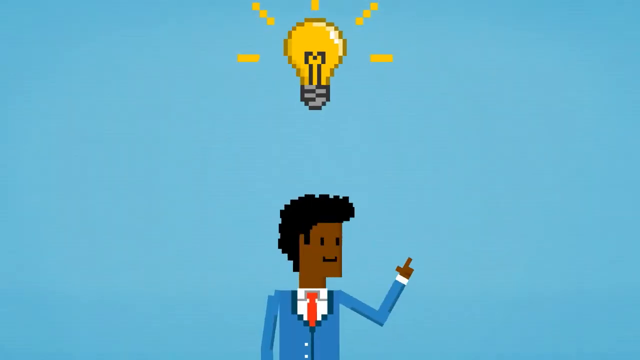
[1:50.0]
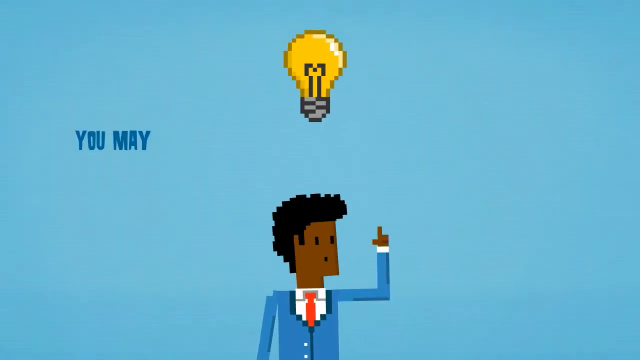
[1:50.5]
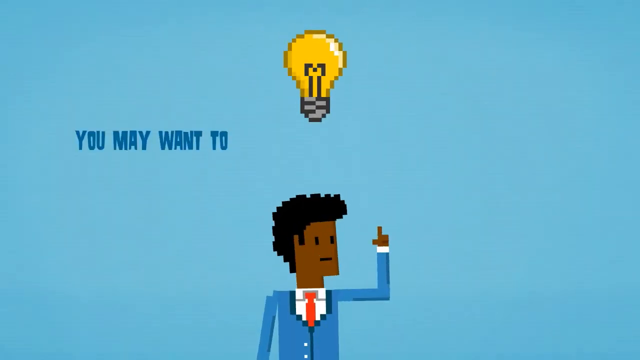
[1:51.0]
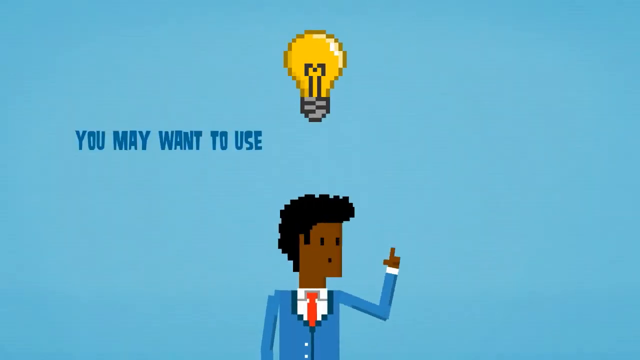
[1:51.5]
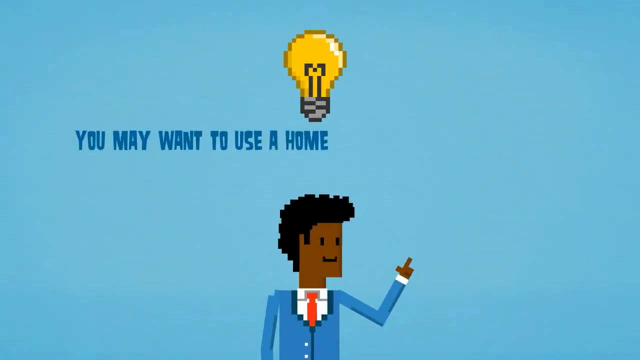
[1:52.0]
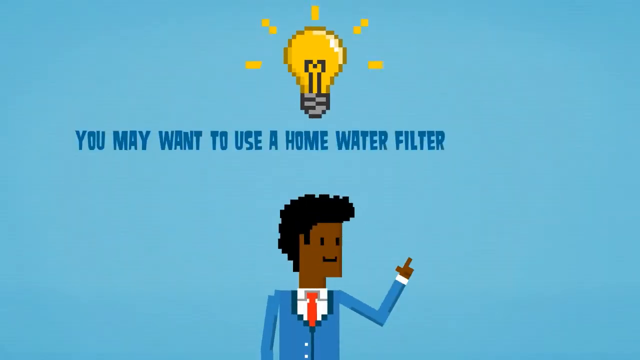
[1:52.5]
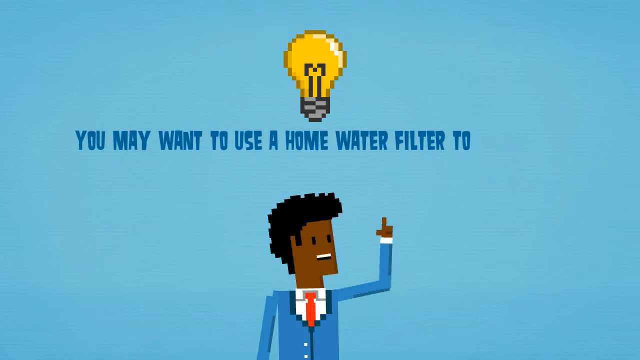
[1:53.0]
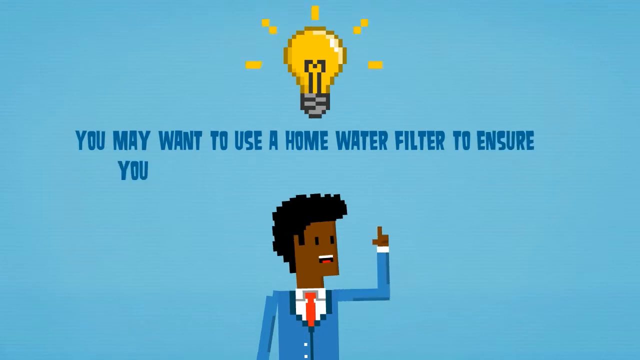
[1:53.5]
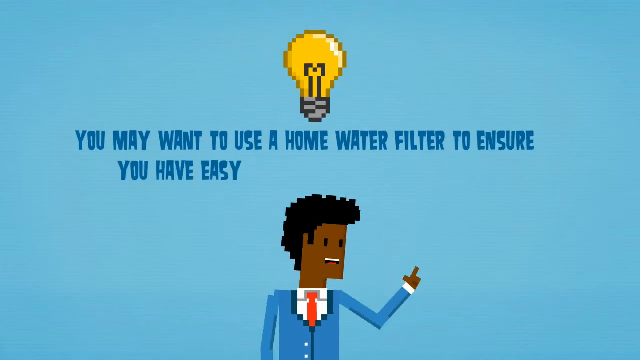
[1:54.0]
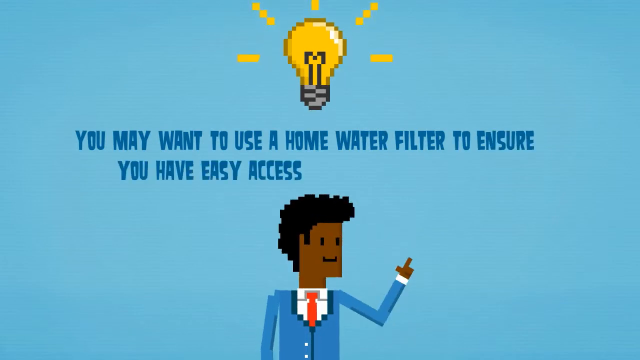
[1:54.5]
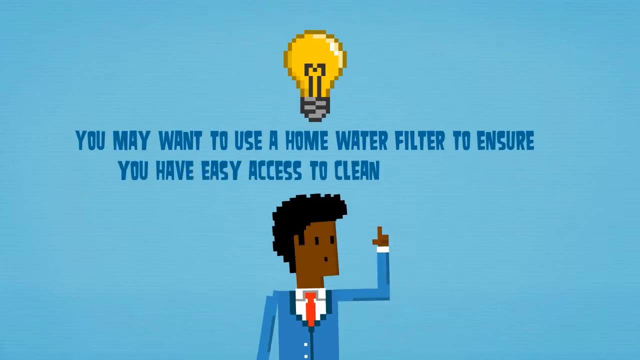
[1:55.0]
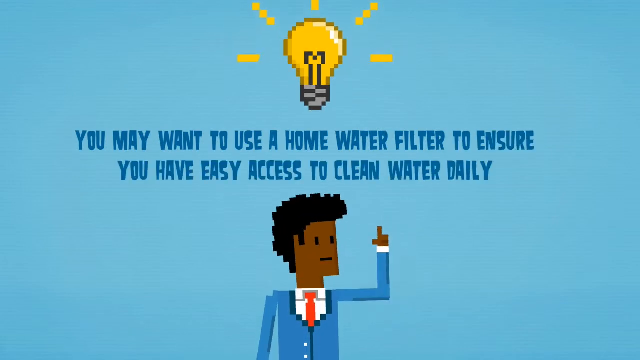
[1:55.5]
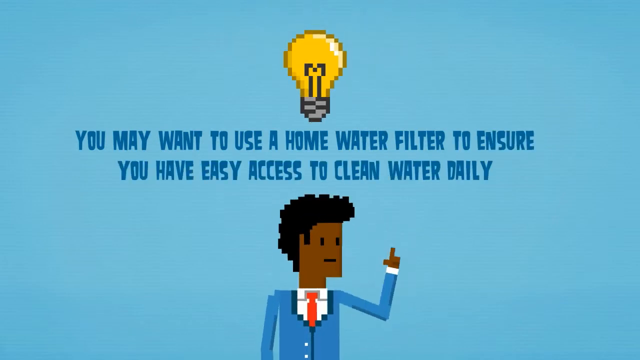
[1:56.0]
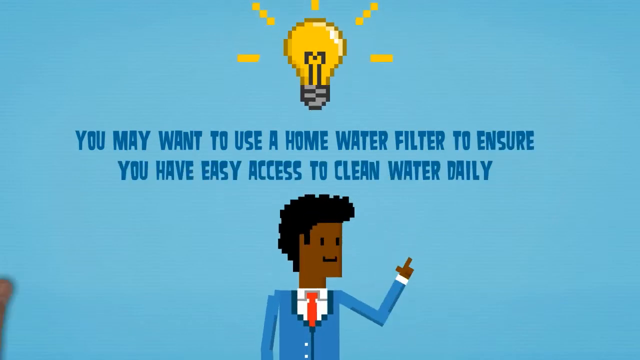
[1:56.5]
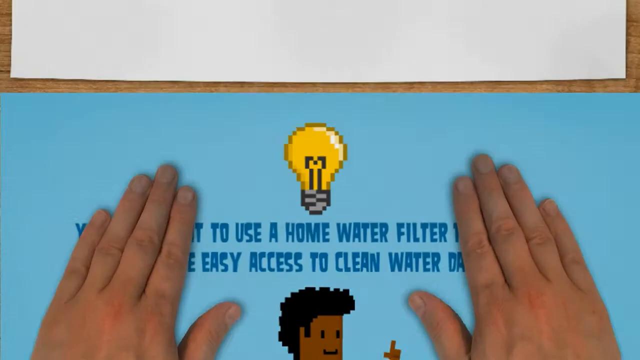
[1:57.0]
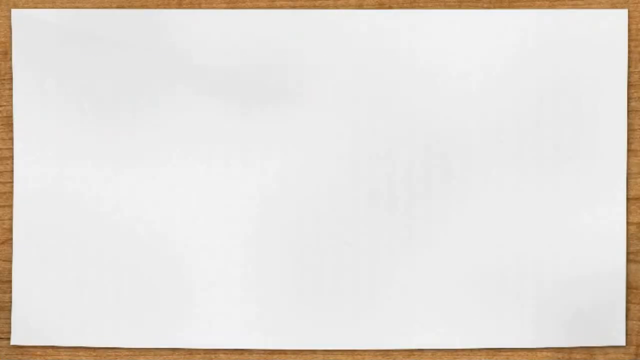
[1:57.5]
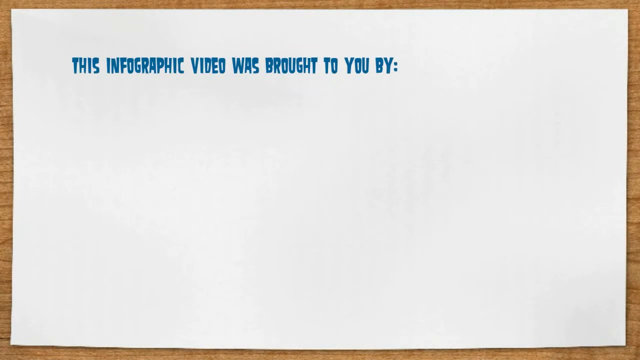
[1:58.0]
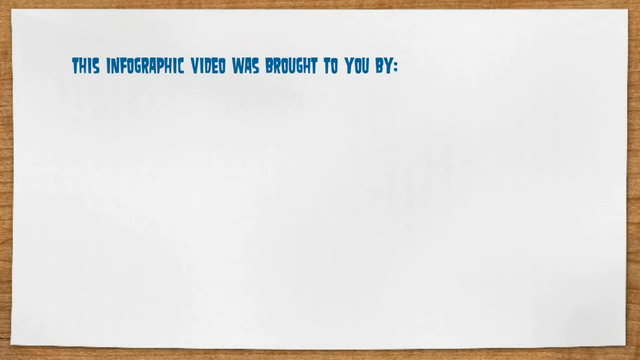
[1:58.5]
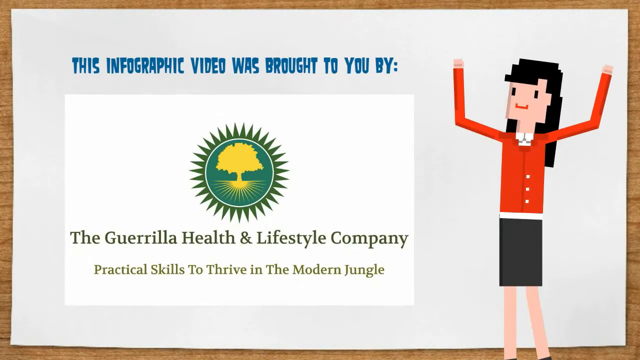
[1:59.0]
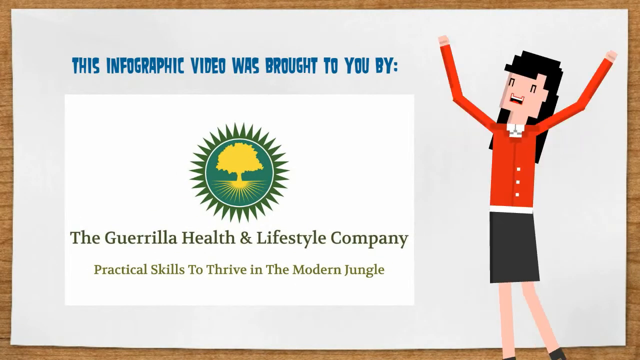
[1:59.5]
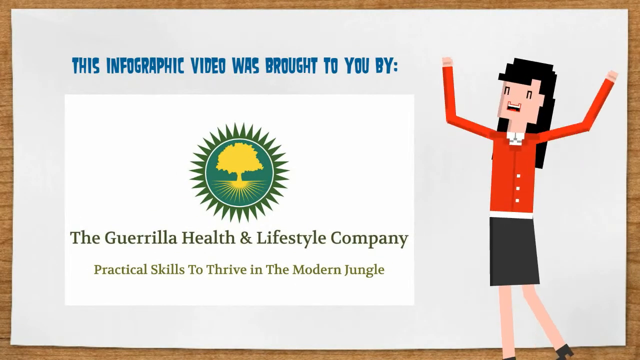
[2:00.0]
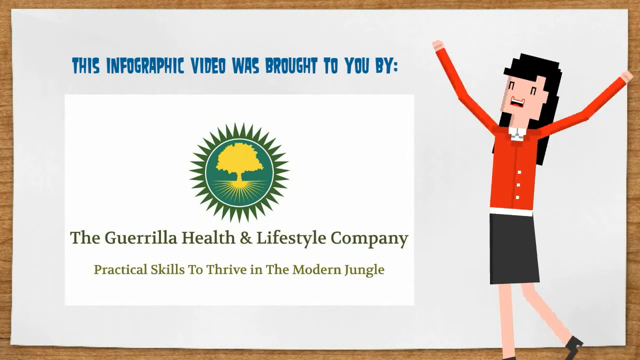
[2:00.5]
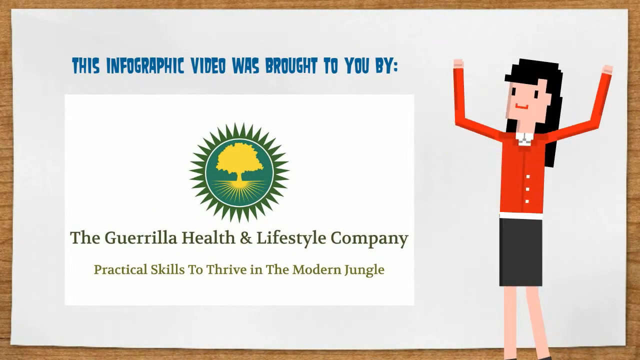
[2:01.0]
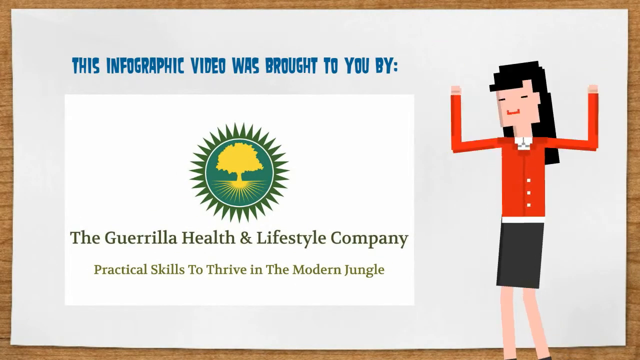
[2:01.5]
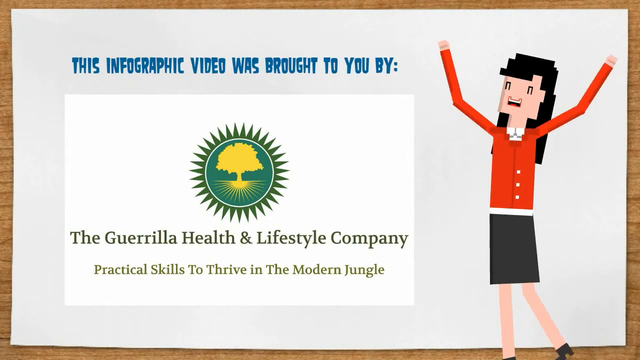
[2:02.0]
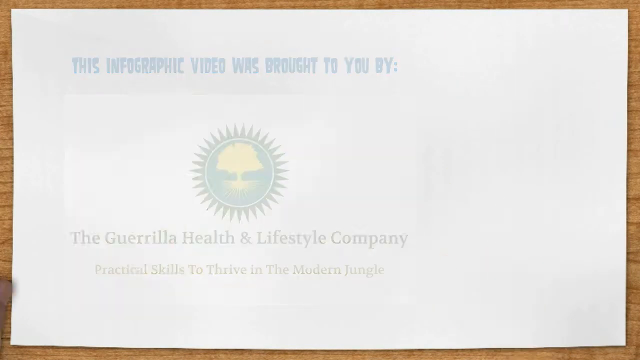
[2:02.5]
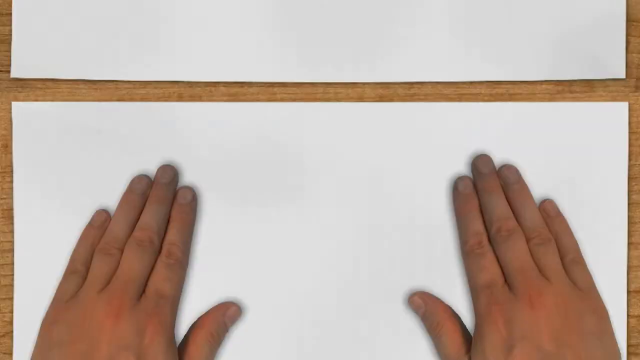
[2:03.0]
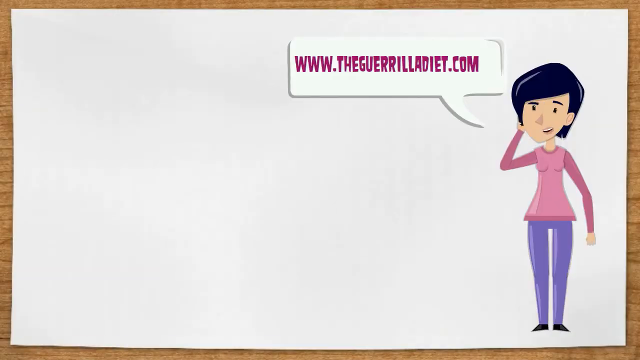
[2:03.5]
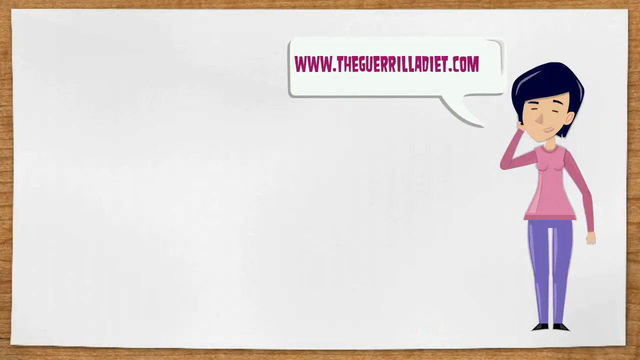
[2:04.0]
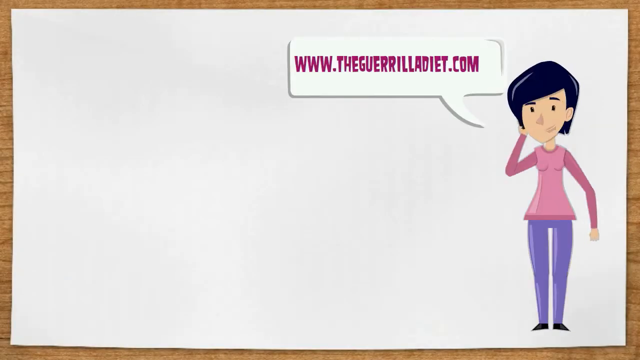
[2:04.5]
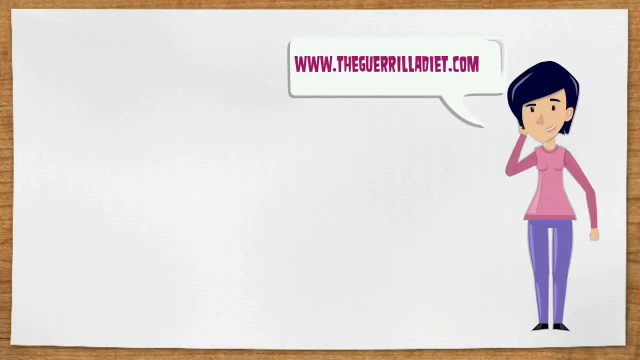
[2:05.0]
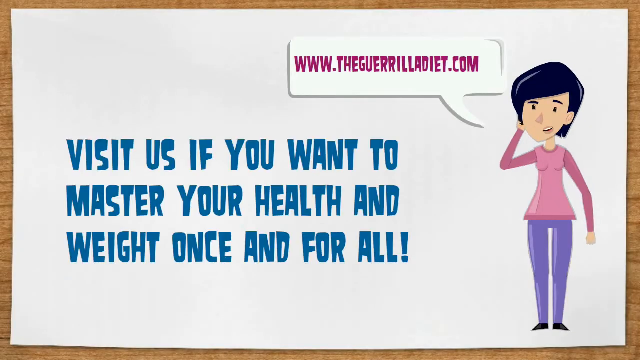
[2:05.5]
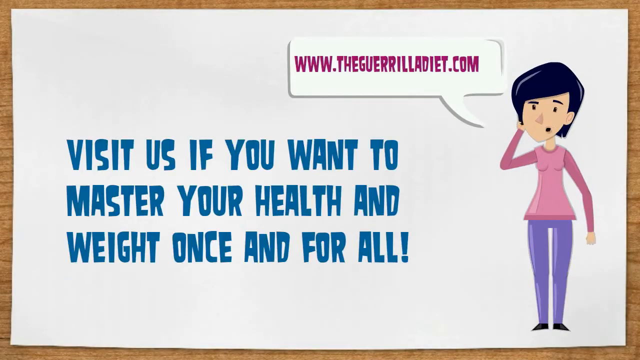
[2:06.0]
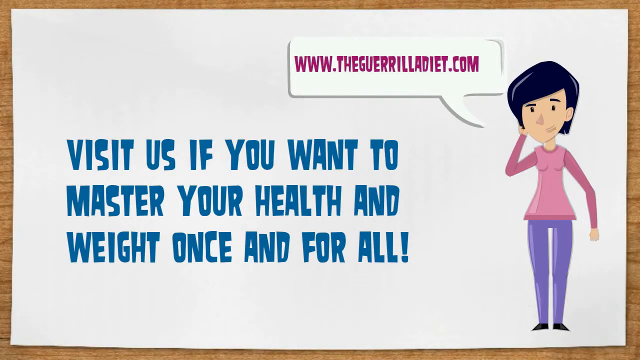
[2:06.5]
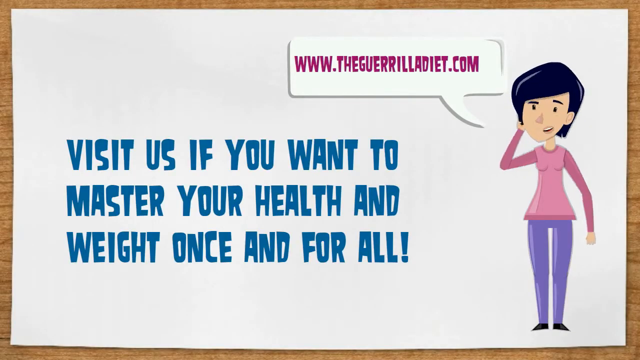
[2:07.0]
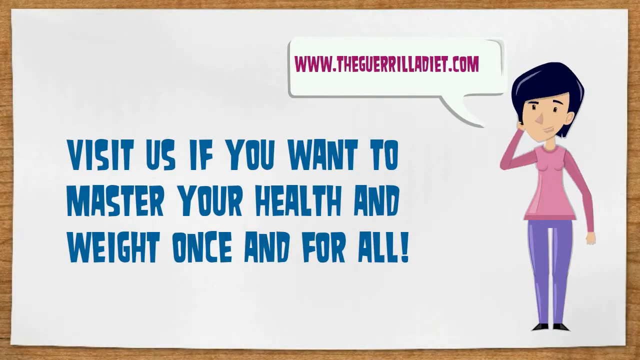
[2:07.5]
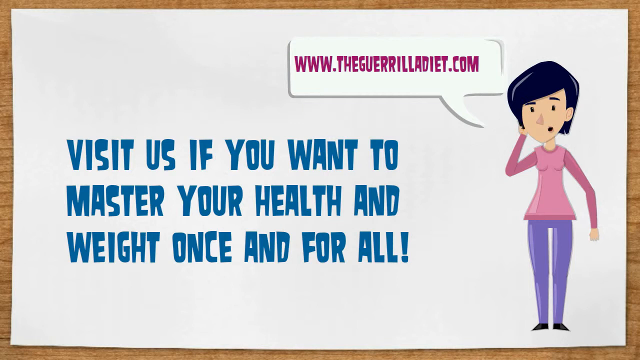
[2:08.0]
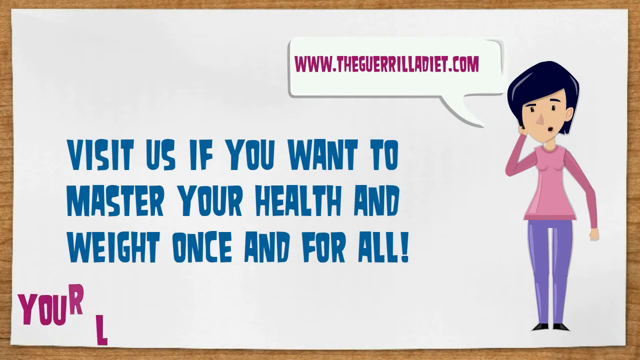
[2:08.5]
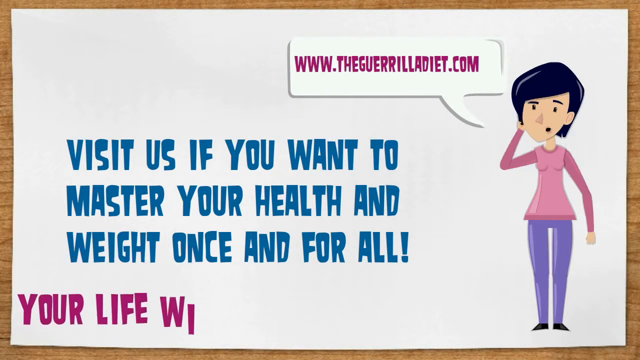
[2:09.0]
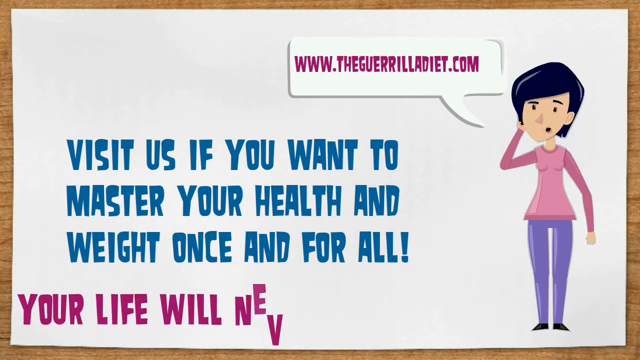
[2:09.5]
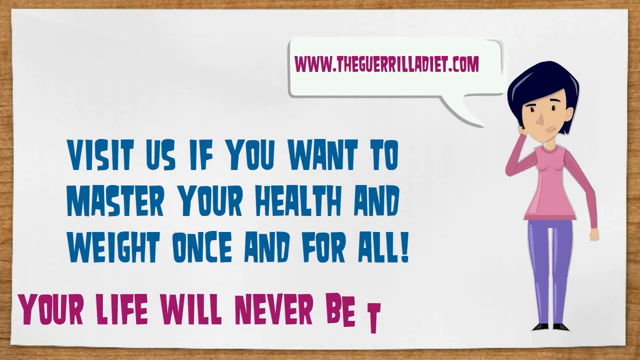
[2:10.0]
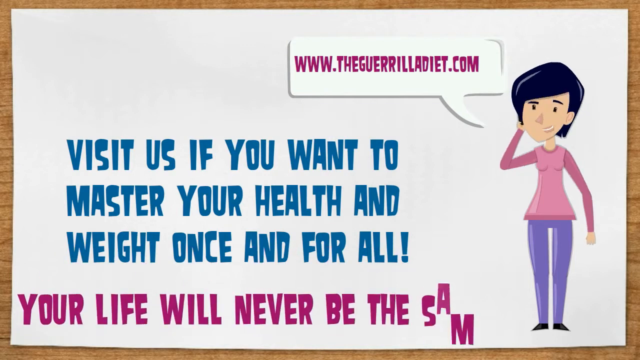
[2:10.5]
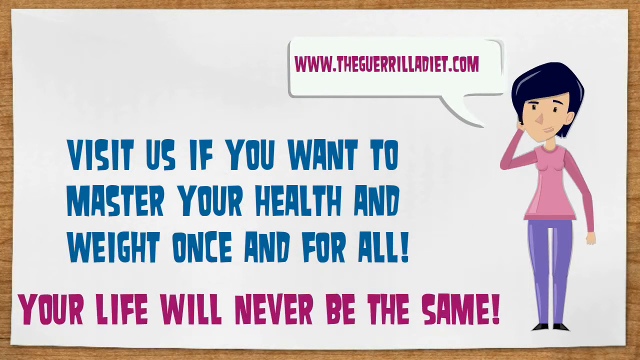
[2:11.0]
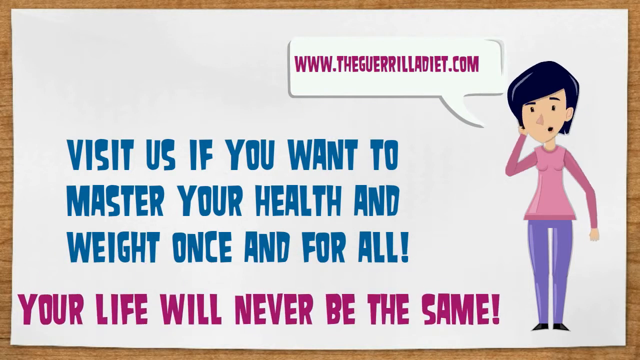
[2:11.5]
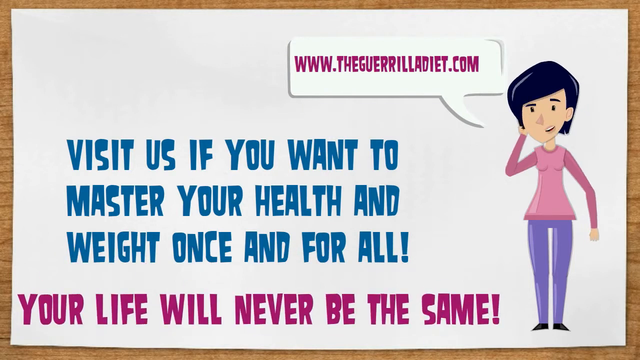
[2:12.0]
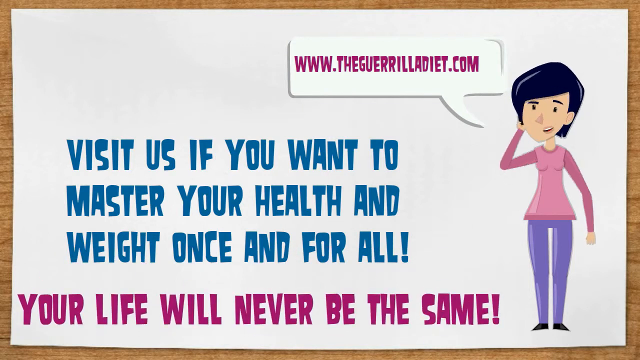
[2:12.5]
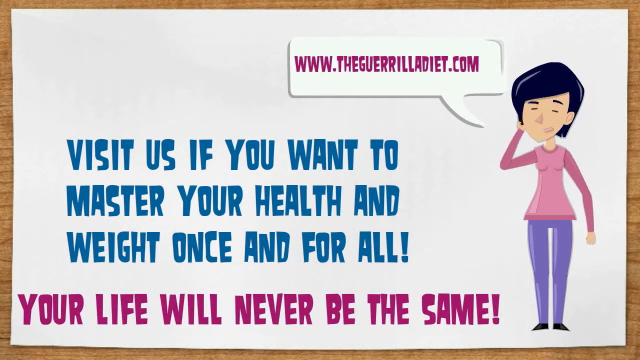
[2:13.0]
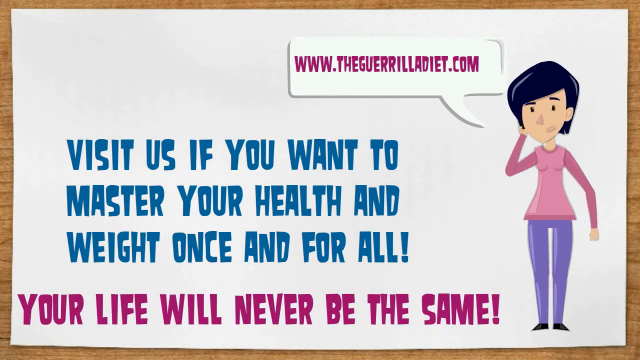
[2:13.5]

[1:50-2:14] An 8-bit image of a black man with black hair, wearing a light blue suit, a white shirt and a red tie, appears. His right arm points up, index finger and thumb pointing in a positive manner toward the top right corner of the image. A light bulb appears at the top of the video and slowly descends, making it look as if the man has had a thought. The light bulb bounces up and down as the man moves his hand and shakes his head to the side as if talking. Meanwhile, text appears reading "You may want to use a home water filter to ensure you have easy access to clean water daily." The two hands appear and slide the slide down, leaving just the white paper. It is then replaced by an image of a website's link and text reading "Visit us if you want to master your health and weight once and for all." The text at the bottom then changes to read "your life will never be the same" in purple text.